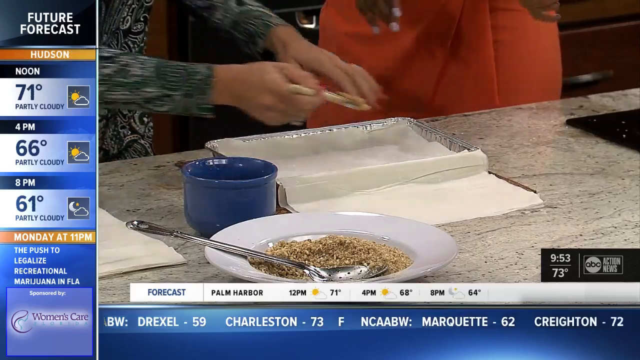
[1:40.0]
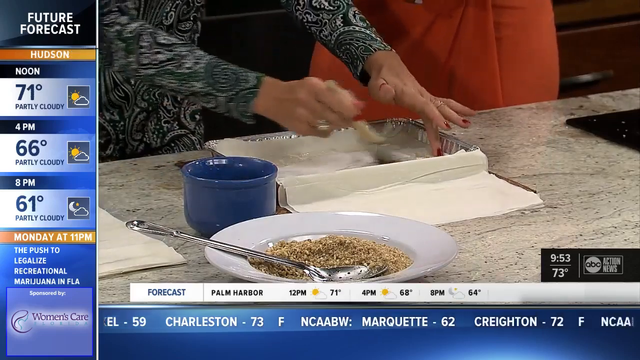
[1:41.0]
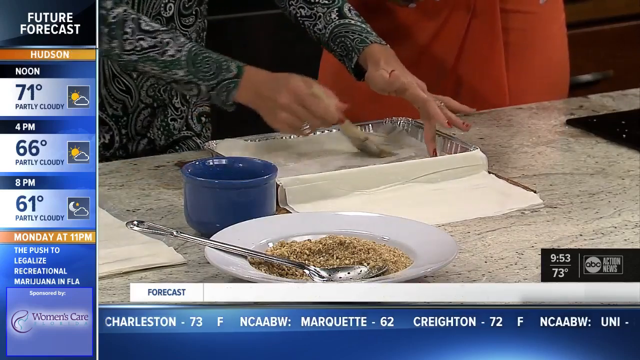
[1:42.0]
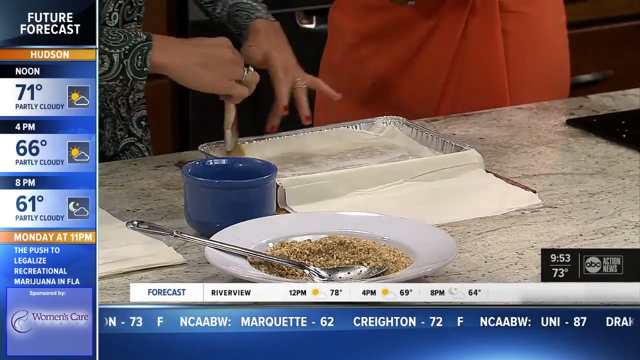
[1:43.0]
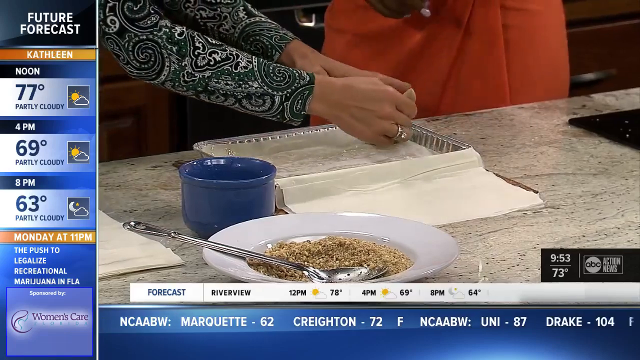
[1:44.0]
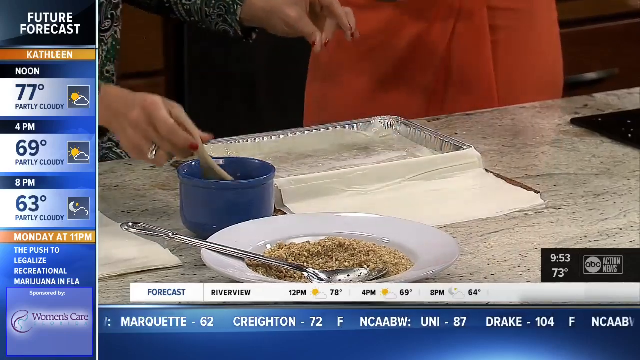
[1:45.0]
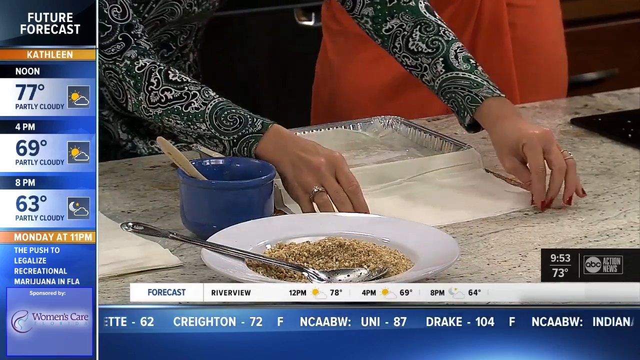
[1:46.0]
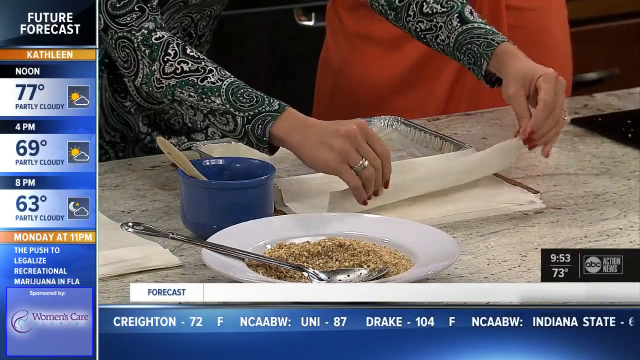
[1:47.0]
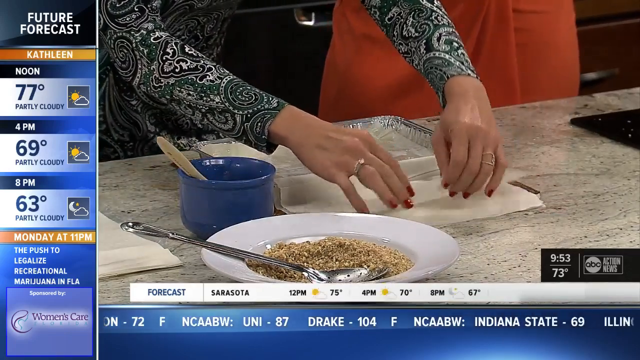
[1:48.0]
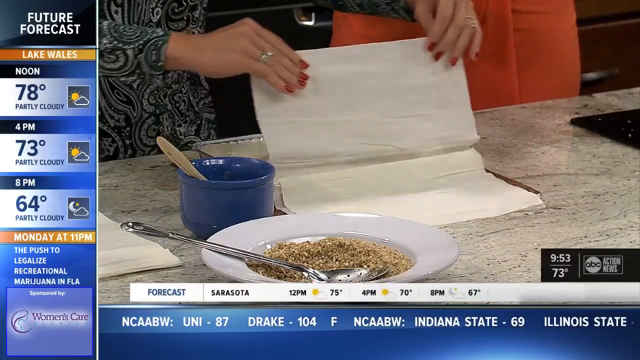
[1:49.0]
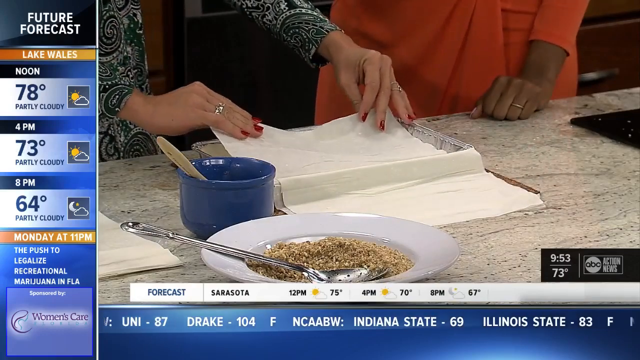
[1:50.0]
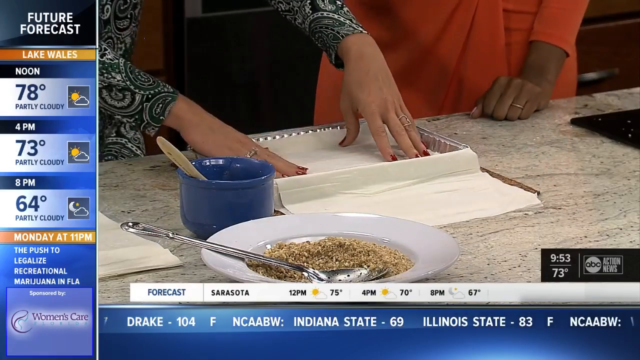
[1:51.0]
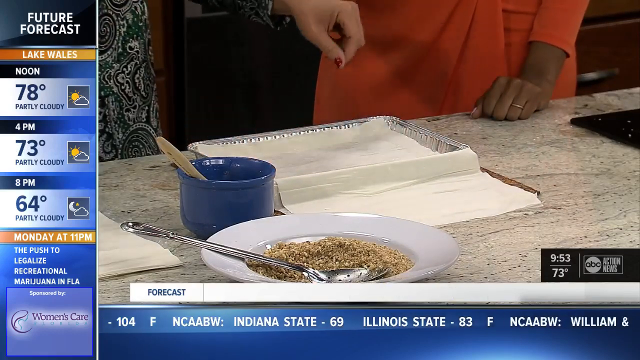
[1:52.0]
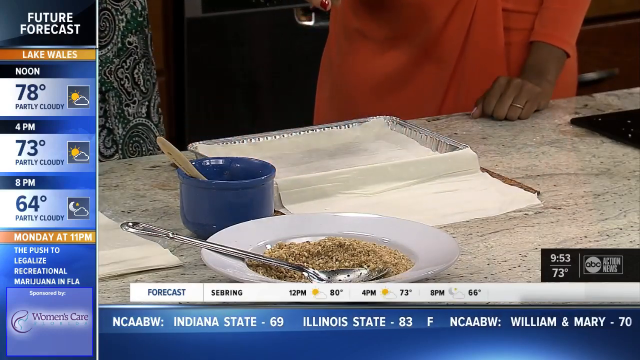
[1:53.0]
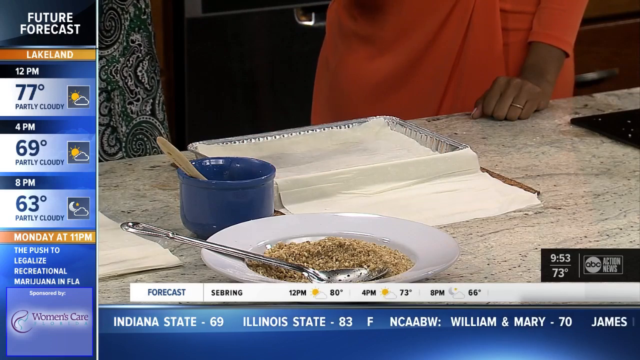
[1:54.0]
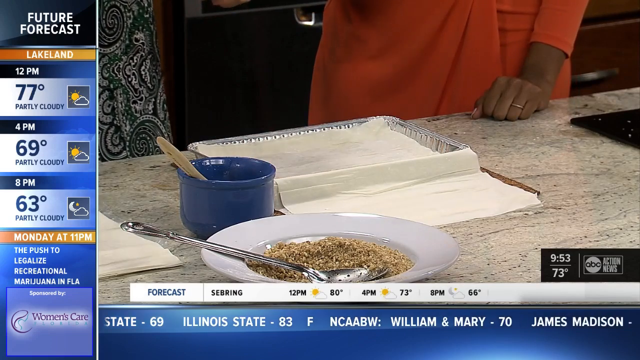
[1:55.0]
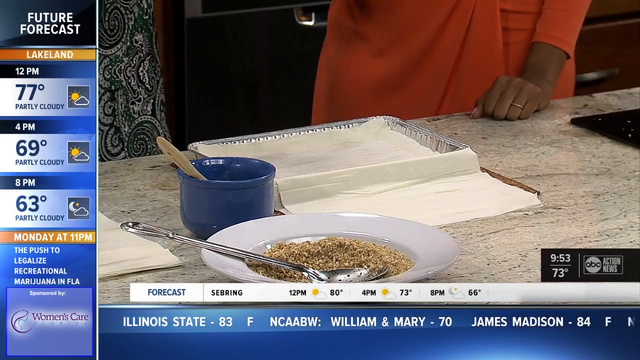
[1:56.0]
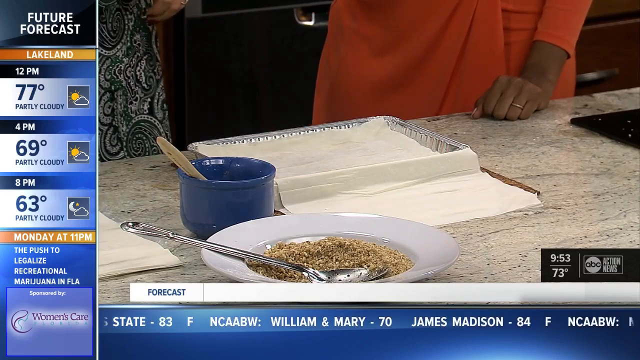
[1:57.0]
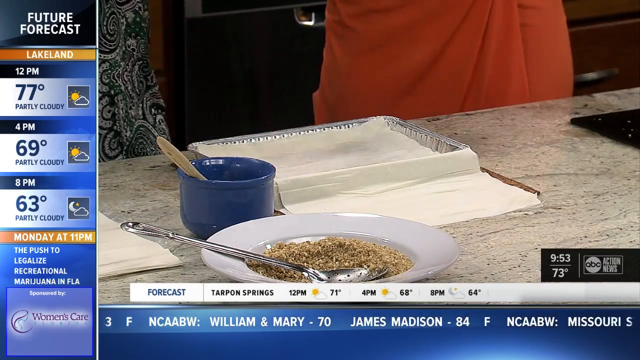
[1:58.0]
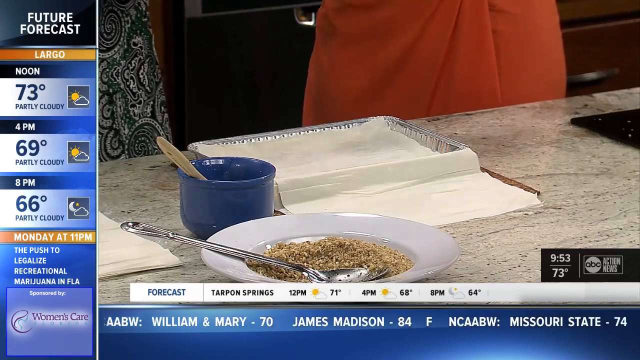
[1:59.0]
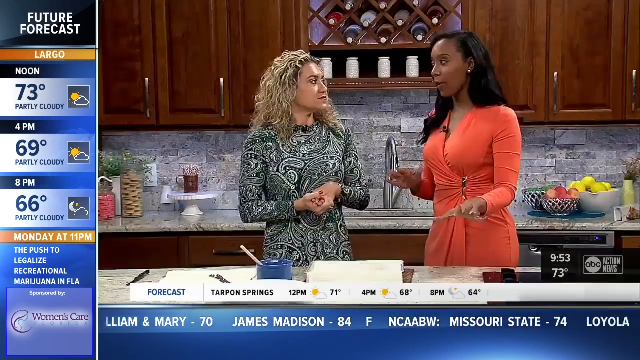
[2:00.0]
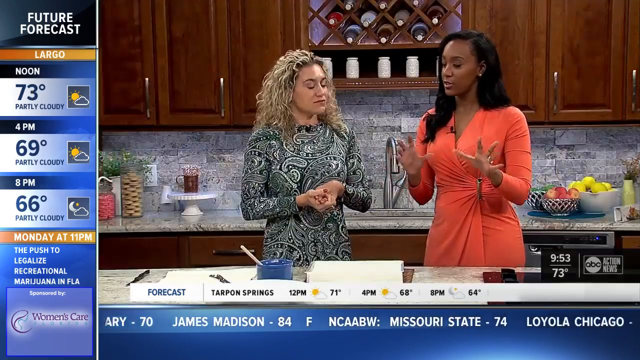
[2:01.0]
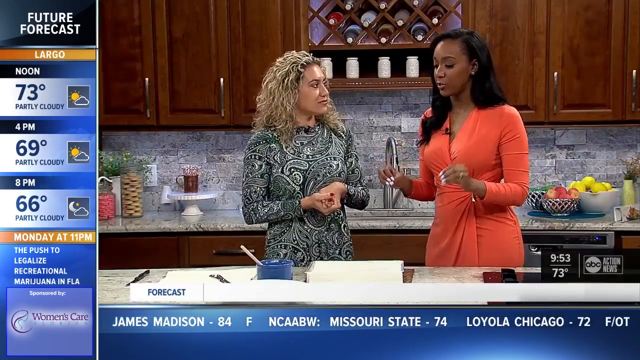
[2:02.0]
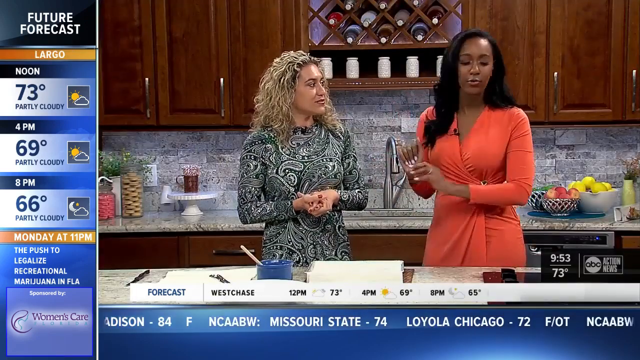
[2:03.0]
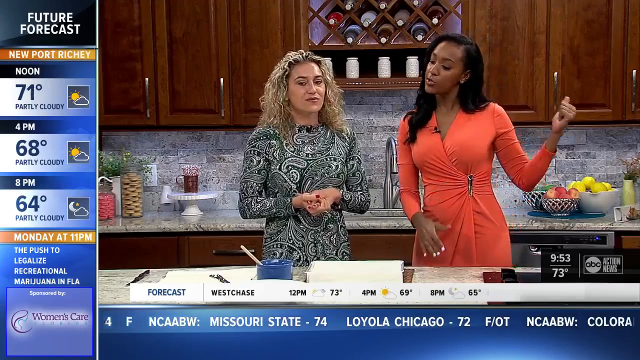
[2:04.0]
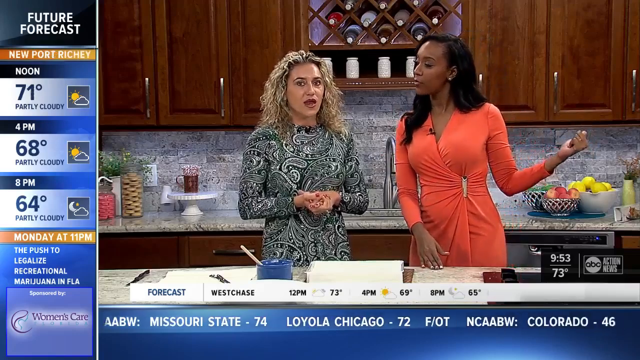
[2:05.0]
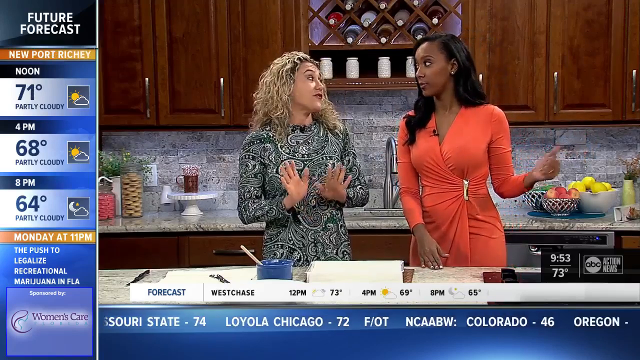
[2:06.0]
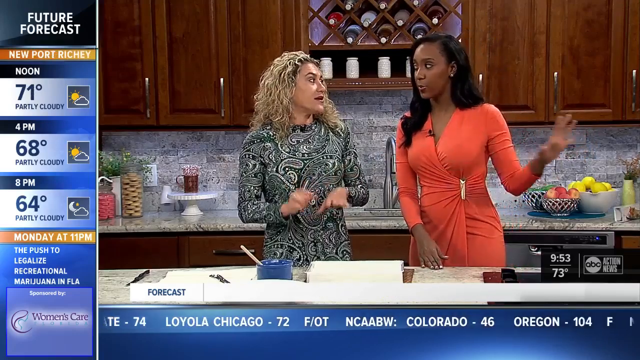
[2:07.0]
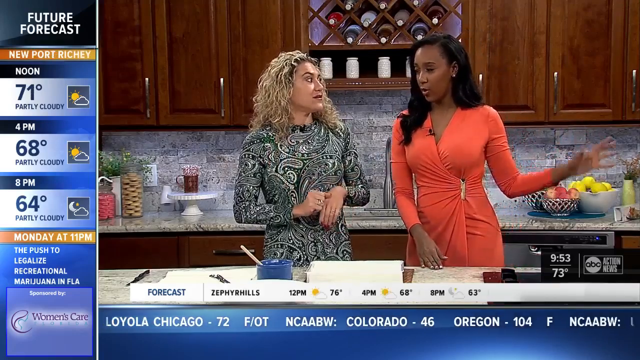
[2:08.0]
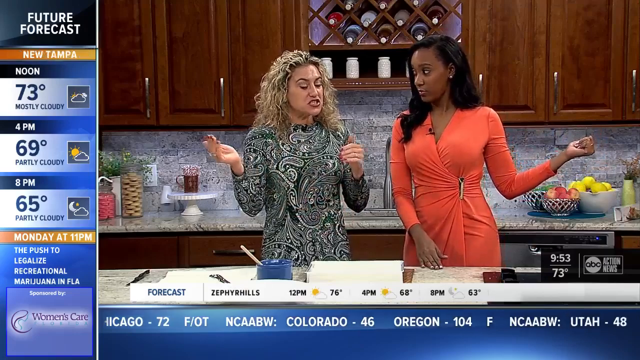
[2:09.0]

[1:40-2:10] Layers are built up for the pastry dessert, with a clean layer up. The woman doing the demonstration holds a brush in her right hand. On the left, text says "future forecast" with Hudson, and underneath: noon, 71 degrees, partly cloudy; 4pm, 66 degrees, partly cloudy; 8pm, 61 degrees, partly cloudy; Monday at 11pm, with "the push to legalize recreational marijuana in Florida" still present on the side. On the right side the time reads "9.53" with "73 degrees" underneath, and the ABC logo and "ABC News" are visible. The woman uses the pastry brush on the corners as well for full coverage, then folds over another pastry sheet; this time she does not add filling, only brushes it, and pulls over another clean sheet. The women then speak, maybe because this was a deviation from before. The African American woman uses her left hand, maybe pointing to an object off camera.